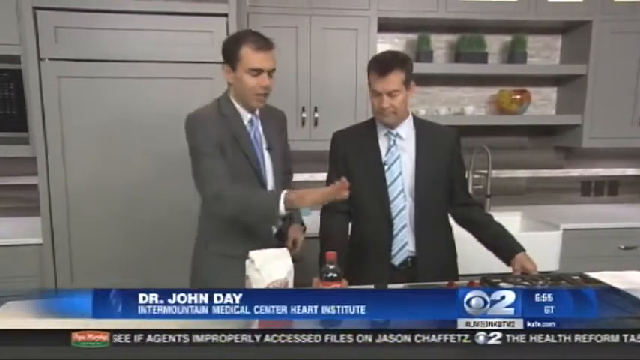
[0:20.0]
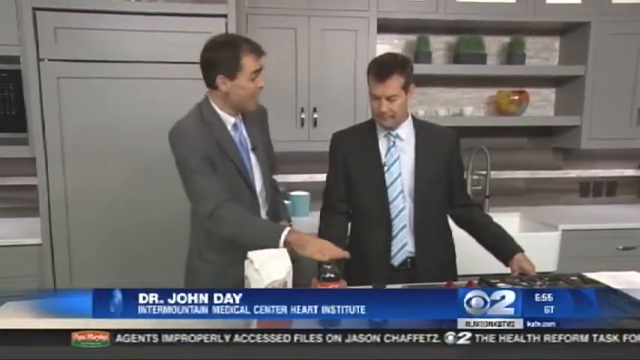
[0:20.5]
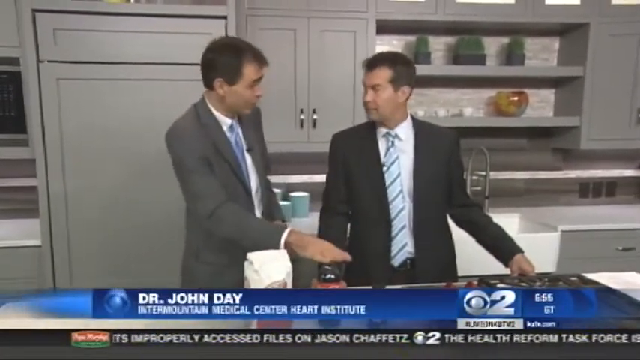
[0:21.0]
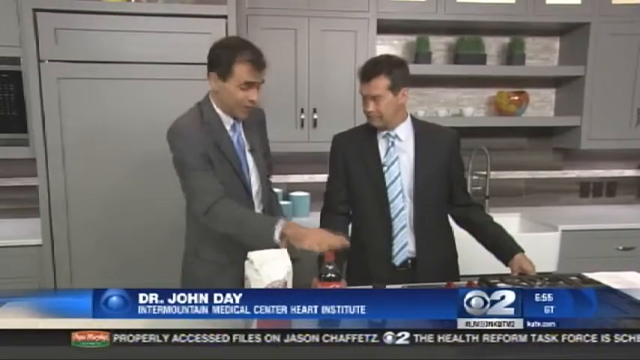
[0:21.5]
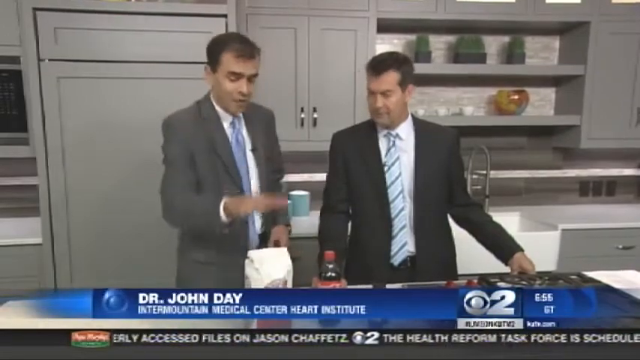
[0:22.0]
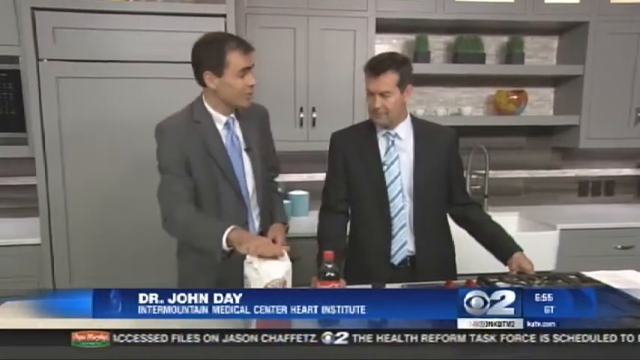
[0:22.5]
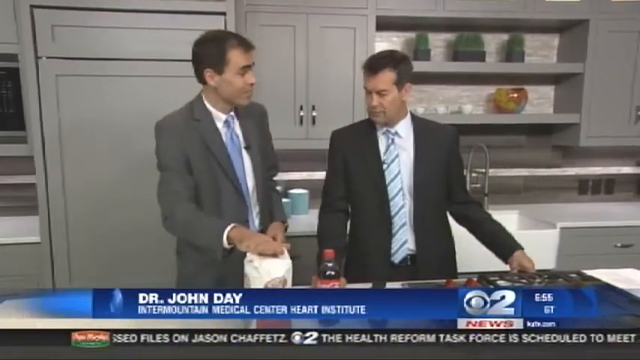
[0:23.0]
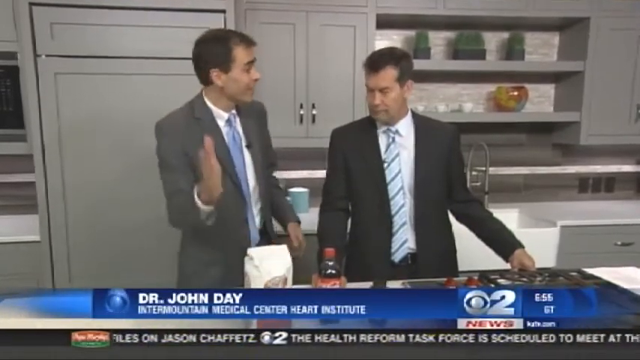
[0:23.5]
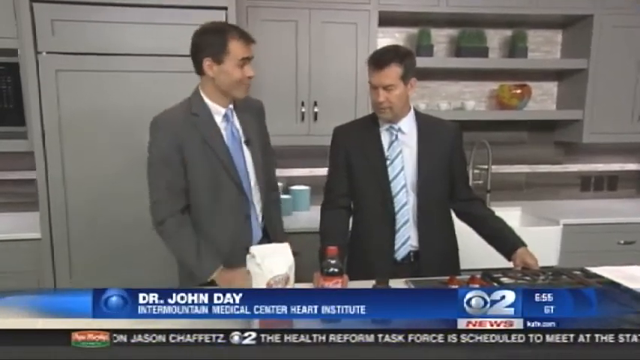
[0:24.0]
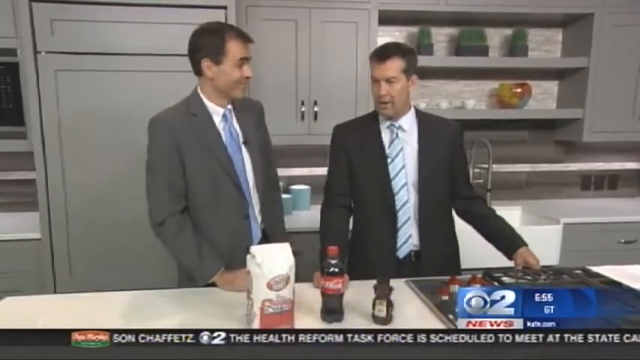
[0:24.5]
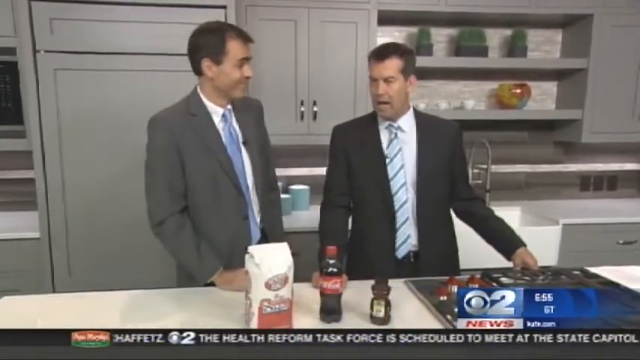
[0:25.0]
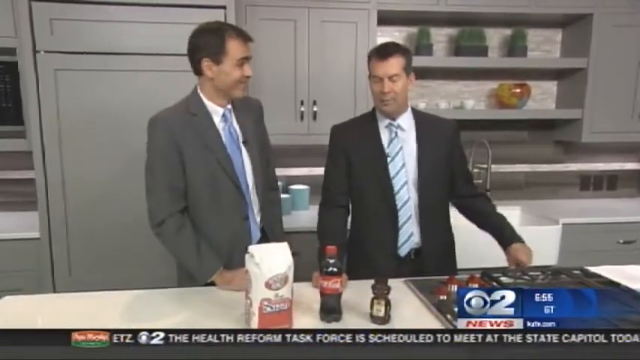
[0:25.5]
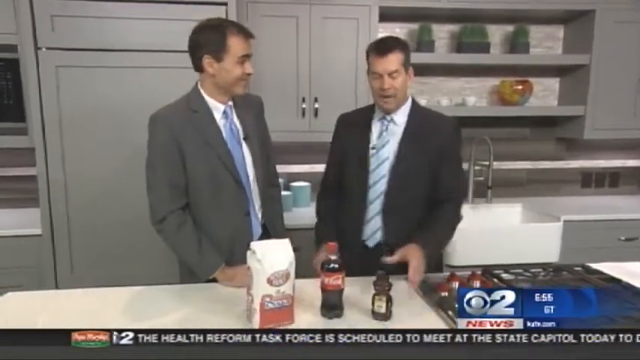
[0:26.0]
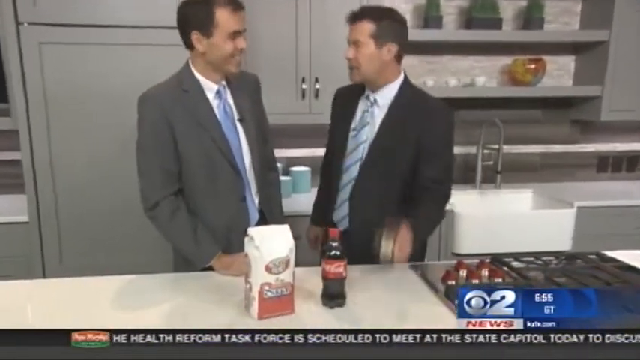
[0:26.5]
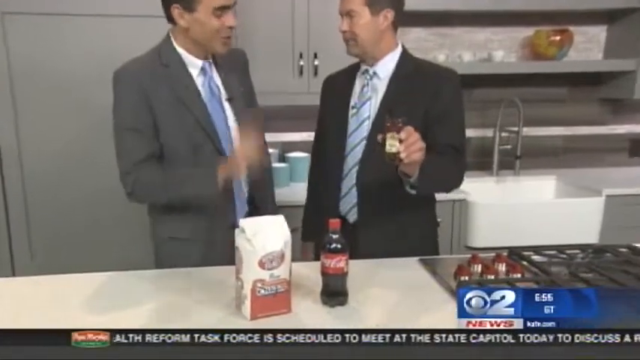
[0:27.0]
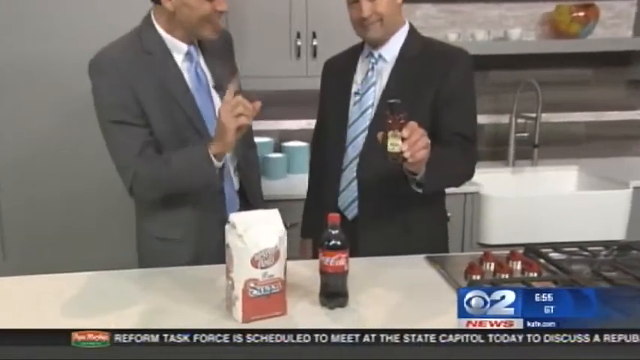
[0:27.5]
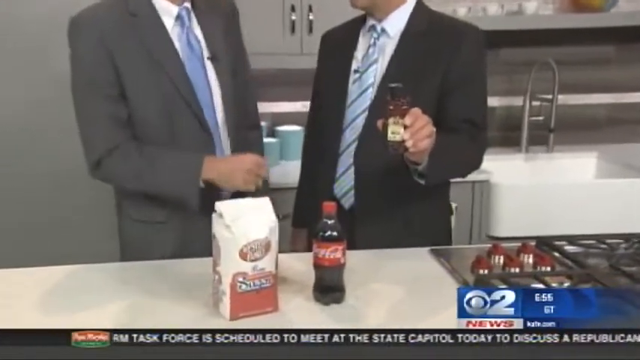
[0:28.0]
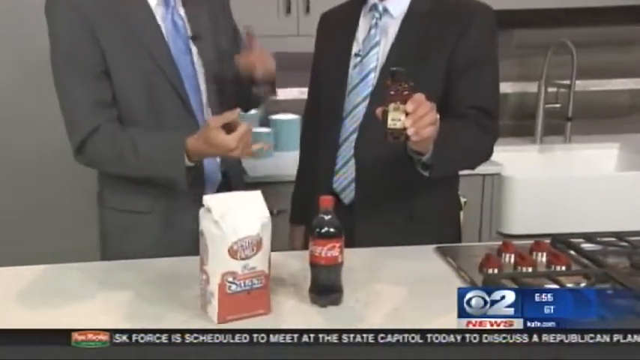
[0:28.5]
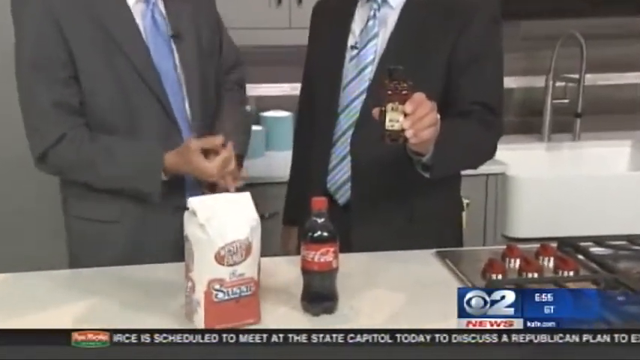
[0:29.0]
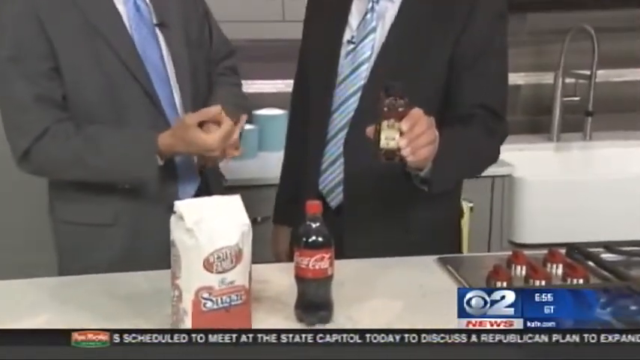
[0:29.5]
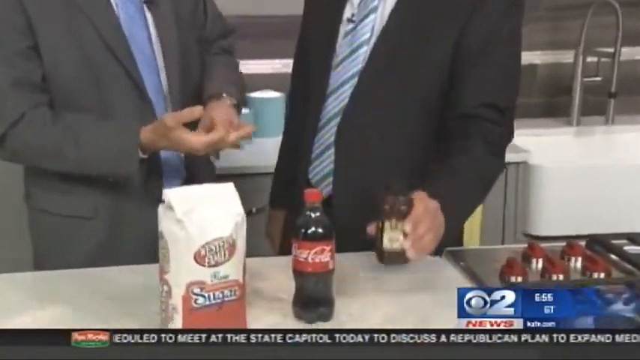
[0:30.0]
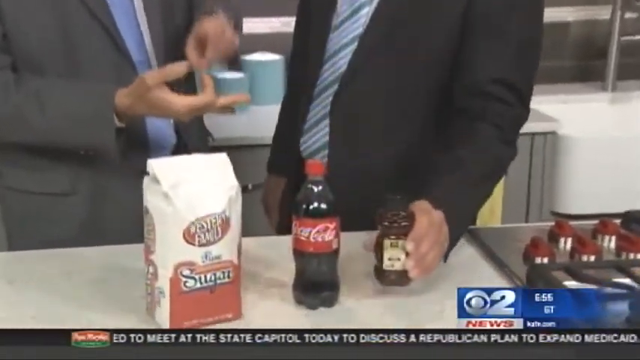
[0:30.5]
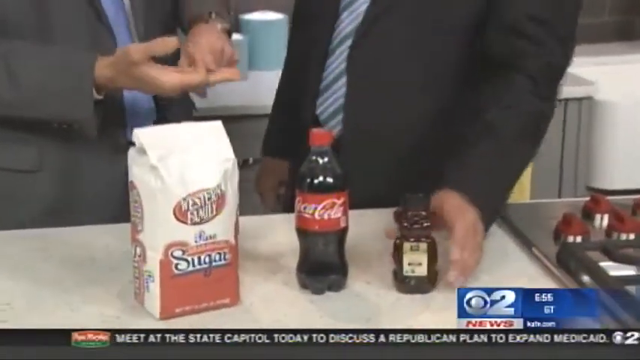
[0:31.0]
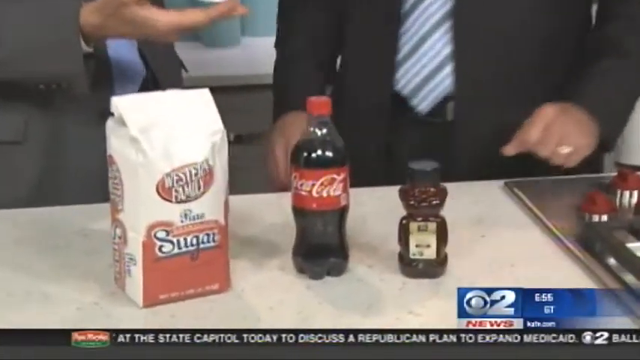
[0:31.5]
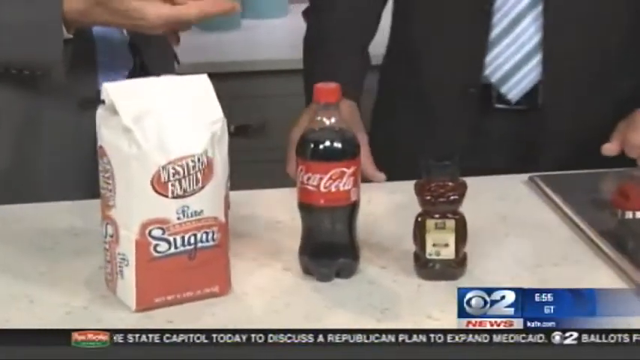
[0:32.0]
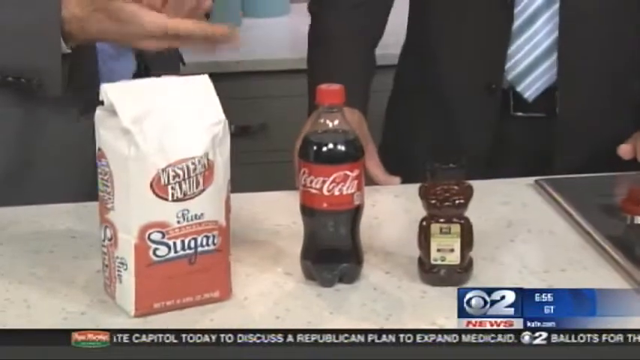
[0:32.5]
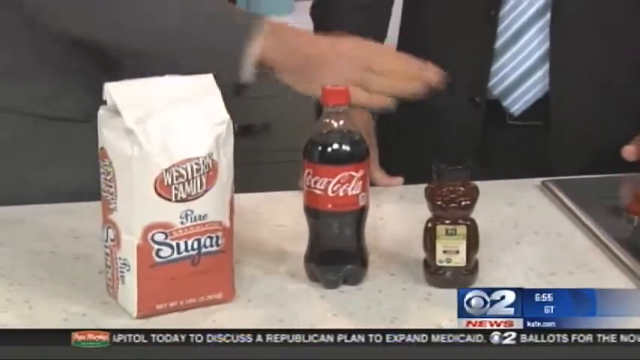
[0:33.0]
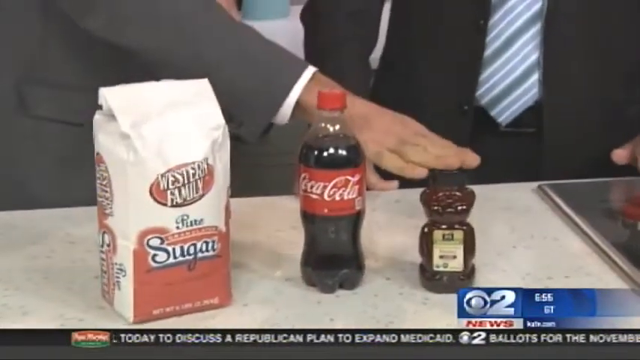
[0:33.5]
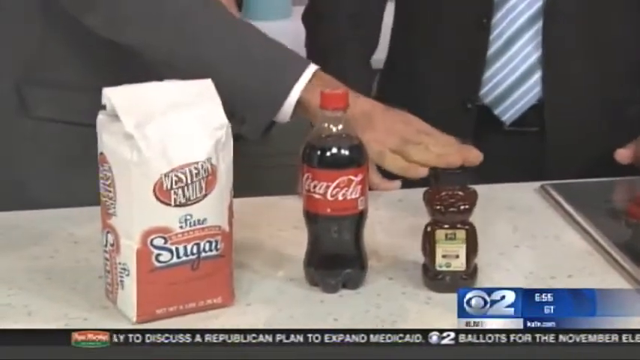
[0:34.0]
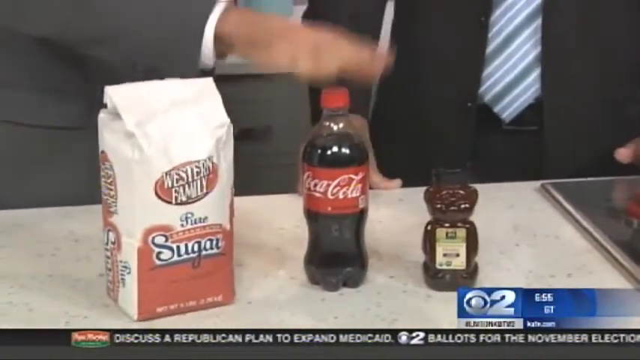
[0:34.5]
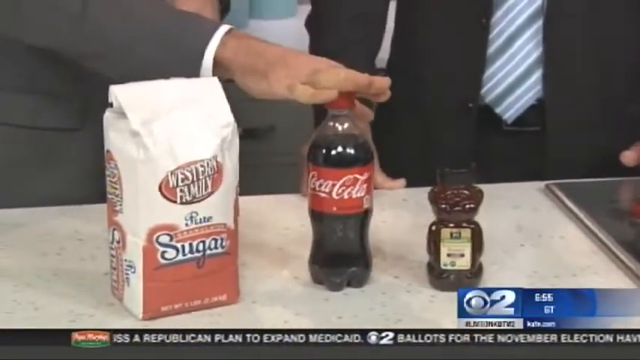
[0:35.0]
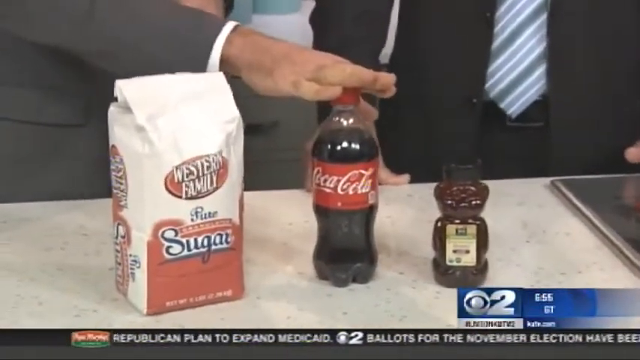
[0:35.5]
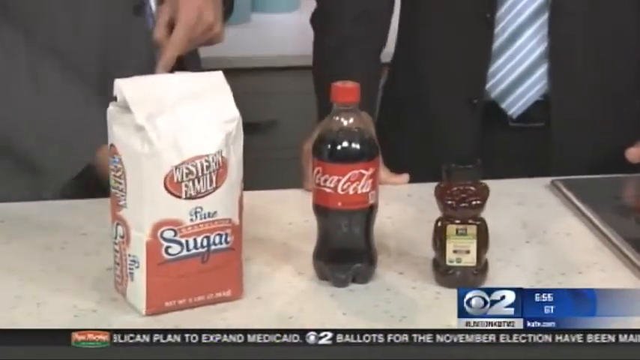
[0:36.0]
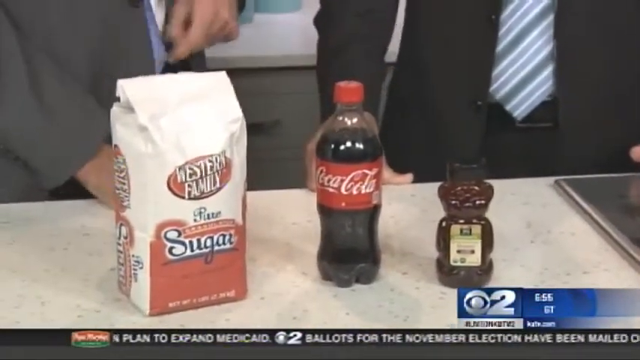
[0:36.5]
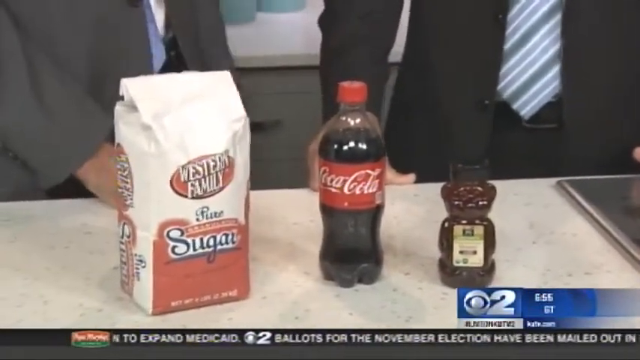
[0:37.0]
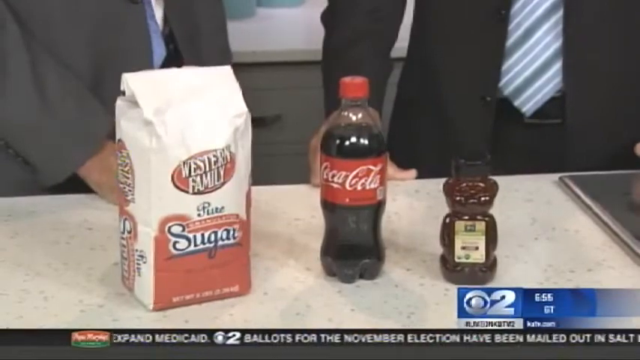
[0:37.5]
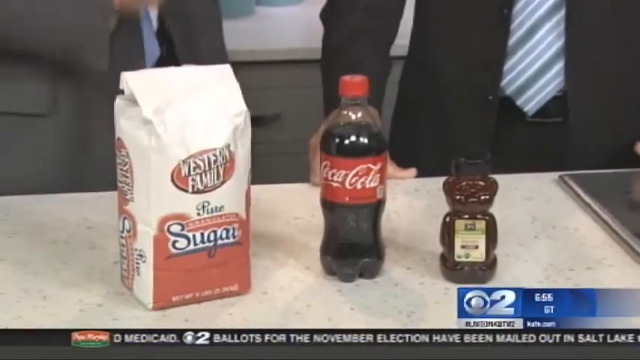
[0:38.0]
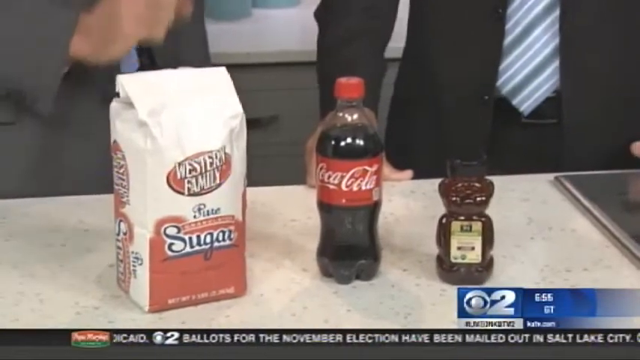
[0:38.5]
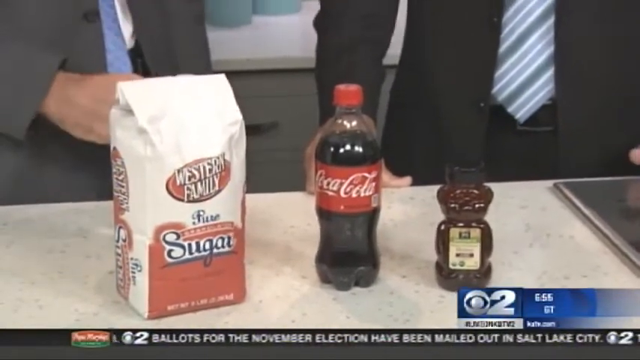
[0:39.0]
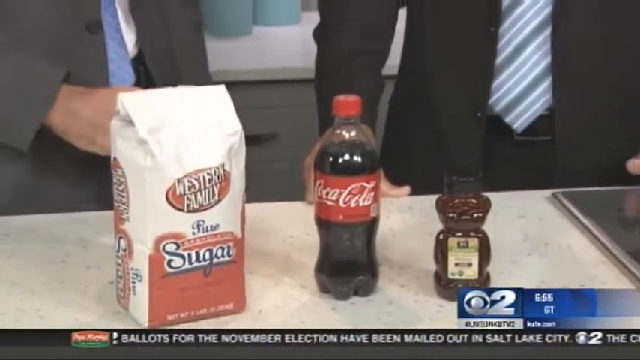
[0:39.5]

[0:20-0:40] Two men are on the kitchen set of a TV show. The man on the left looks to be in his mid to late 40s and wears a light gray suit jacket, a blue striped tie and a white shirt. The man on the right looks to be in his late 40s as well and wears a black blazer jacket, a white and blue striped tie and a white undershirt. Both are light-skinned Caucasian men with short cropped brown hair. Beneath the left man is a title in a blue rectangle next to a CBS logo, reading "Dr. John Day Intermountain Medical Center Heart Institute". The left man places his right hand on top of the cap of a Coca-Cola bottle, part of a collection of items set on the counter; to the left of the bottle is a white bag of sugar. As he speaks, he moves his hand back and forth between the bag of sugar and the Coca-Cola bottle. The man on the right reaches his left hand down and picks up a brown bottle of honey shaped like a bear. The camera zooms in closer on the three products arranged side by side from left to right: the bag of sugar, a Coca-Cola bottle with a red label and a brown plastic bottle of honey. The left man's hand continues to tap from item to item, presumably as he speaks about them.